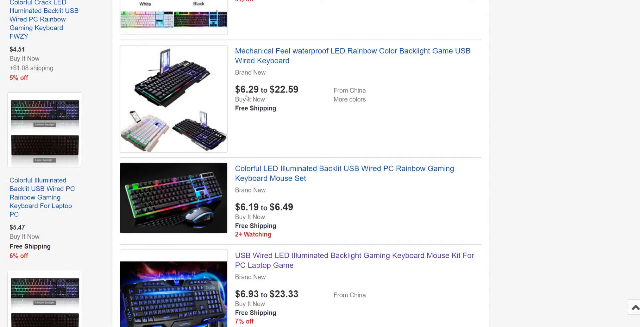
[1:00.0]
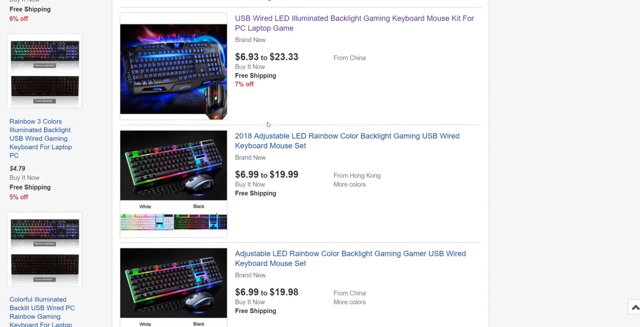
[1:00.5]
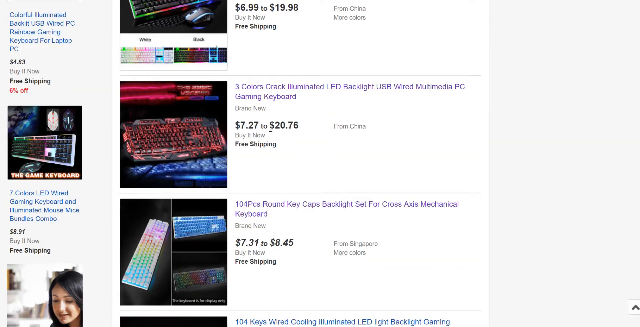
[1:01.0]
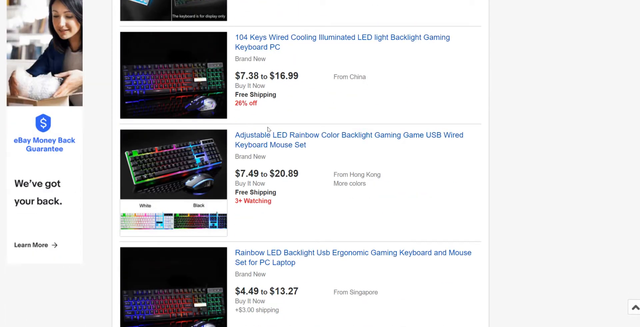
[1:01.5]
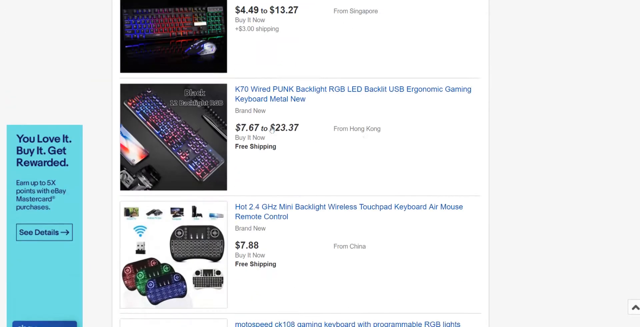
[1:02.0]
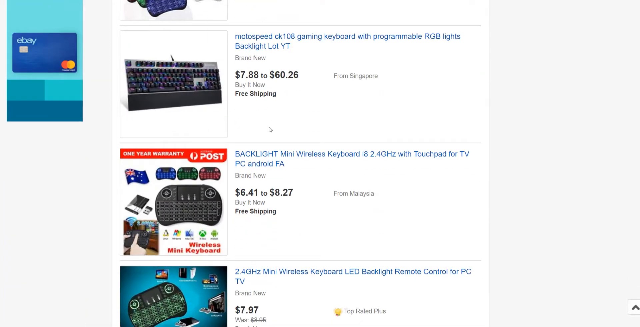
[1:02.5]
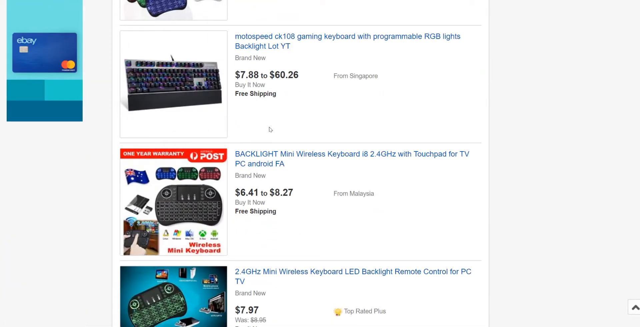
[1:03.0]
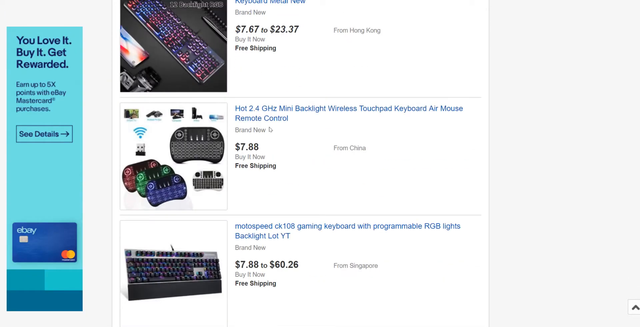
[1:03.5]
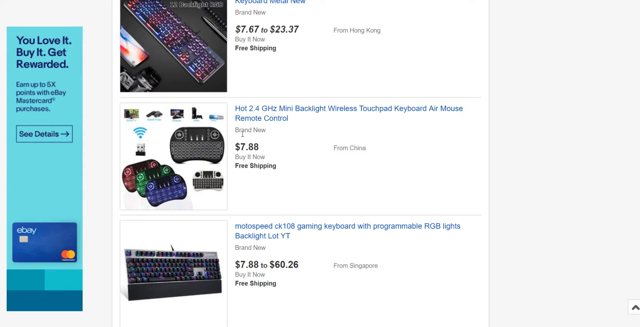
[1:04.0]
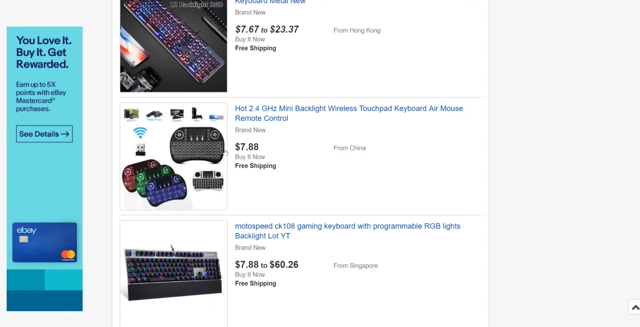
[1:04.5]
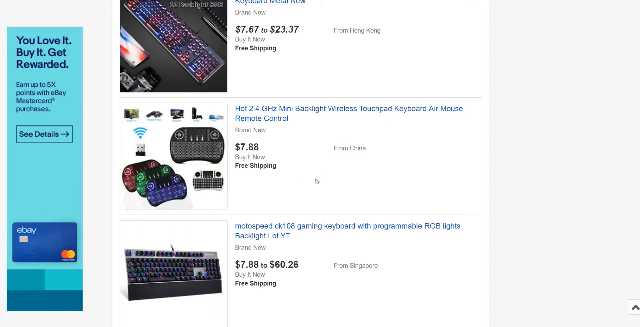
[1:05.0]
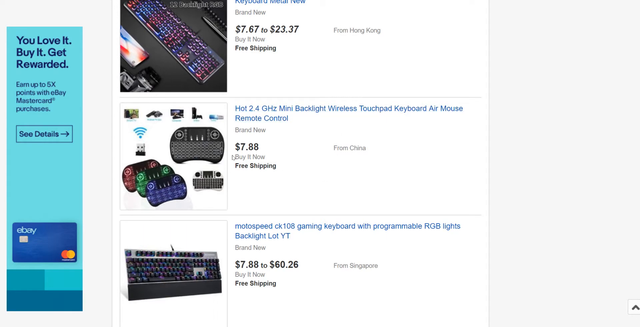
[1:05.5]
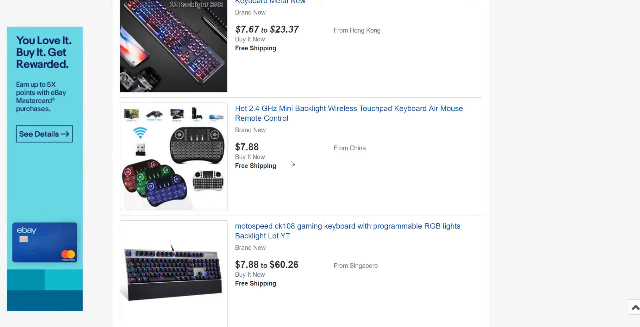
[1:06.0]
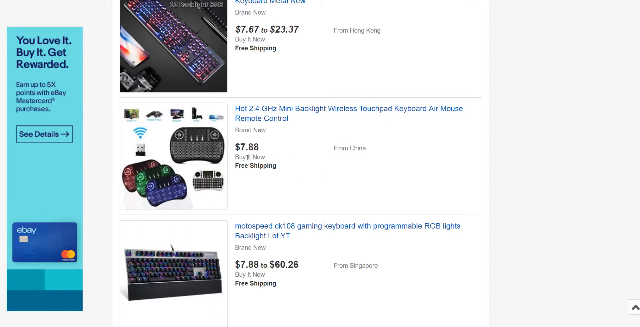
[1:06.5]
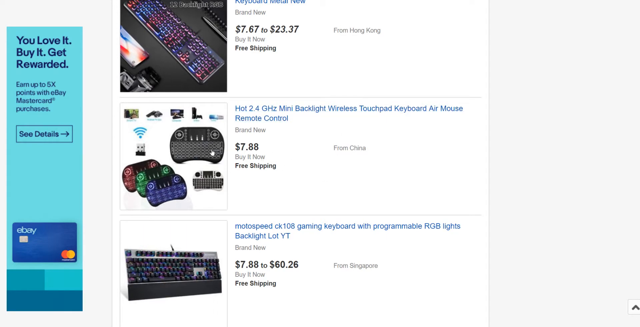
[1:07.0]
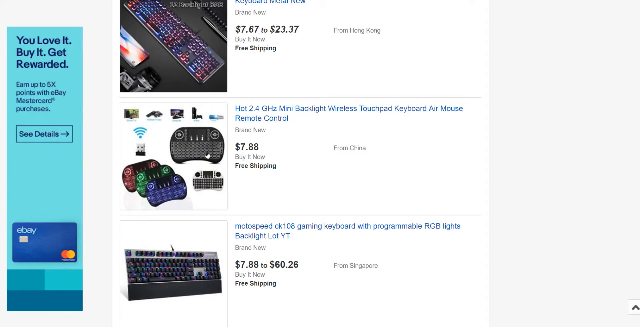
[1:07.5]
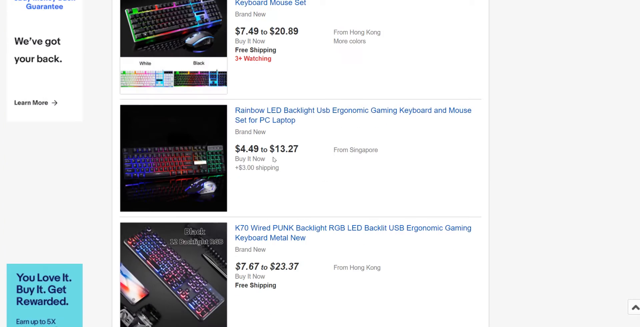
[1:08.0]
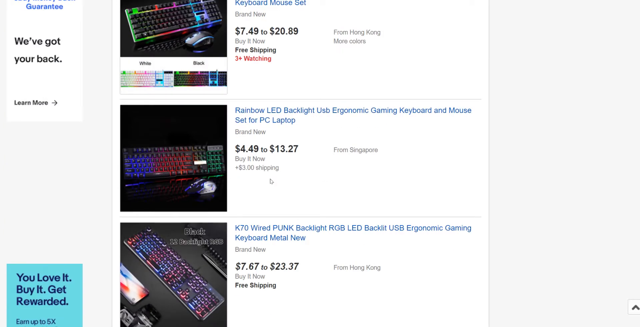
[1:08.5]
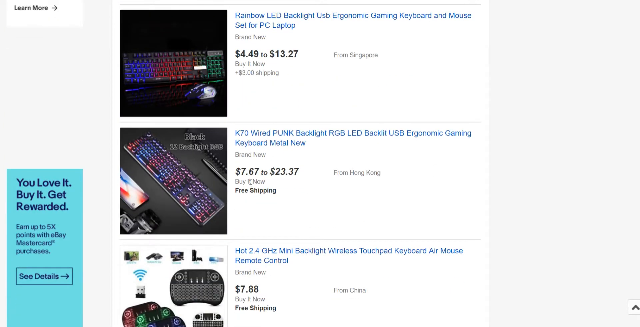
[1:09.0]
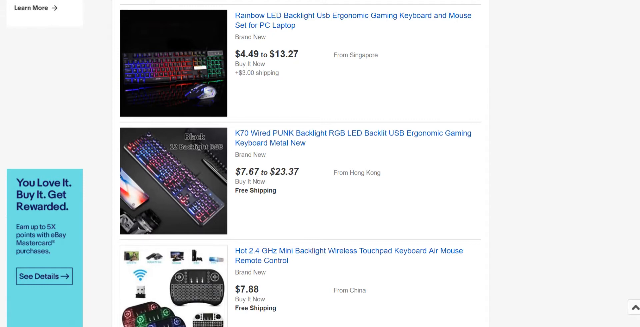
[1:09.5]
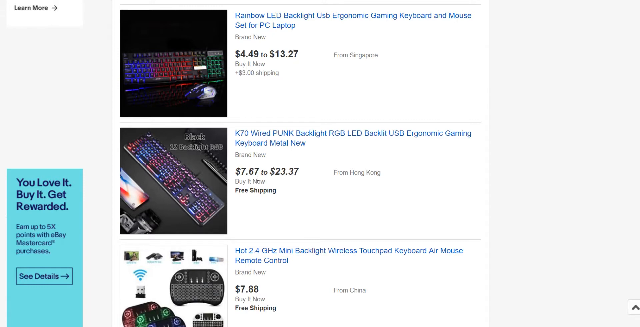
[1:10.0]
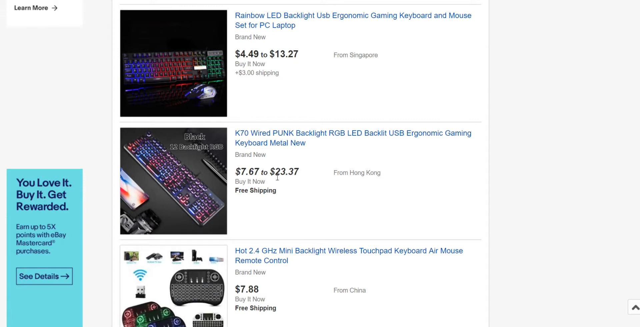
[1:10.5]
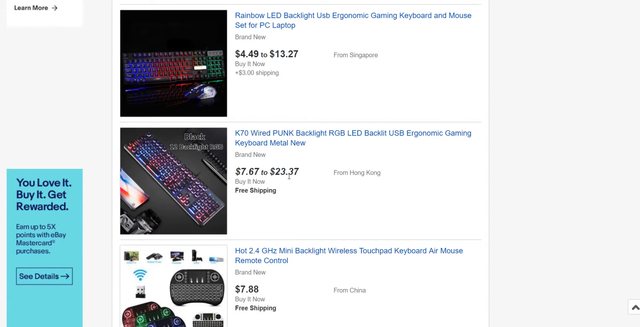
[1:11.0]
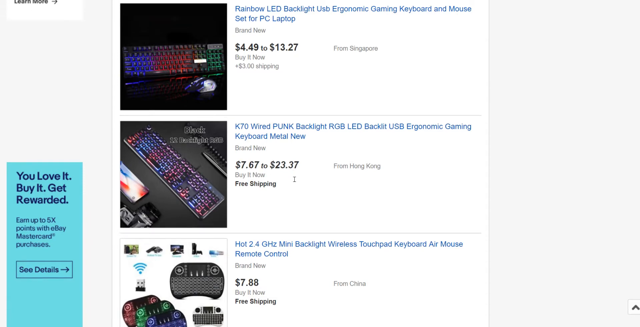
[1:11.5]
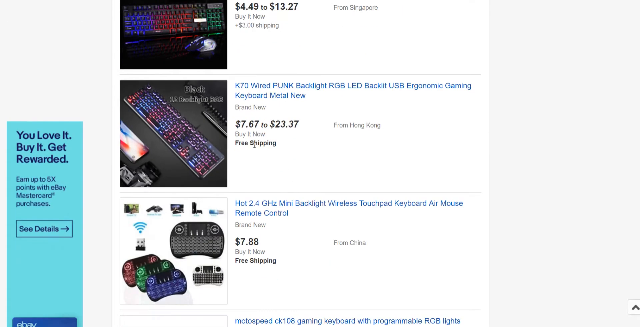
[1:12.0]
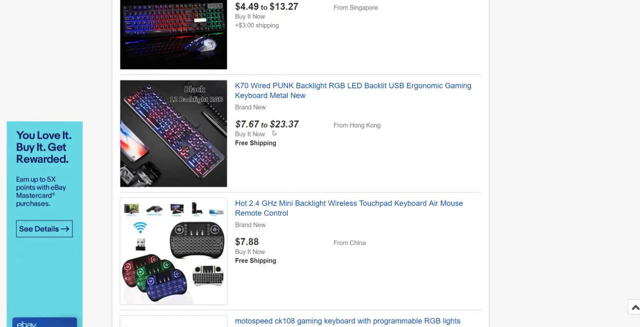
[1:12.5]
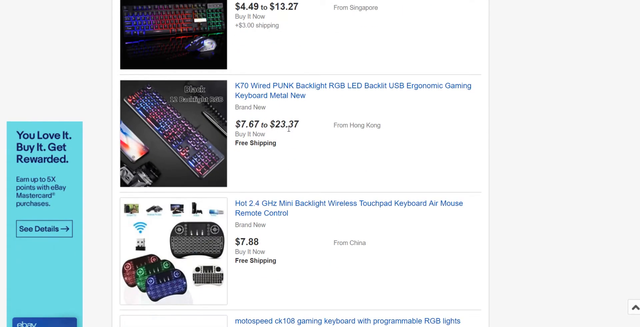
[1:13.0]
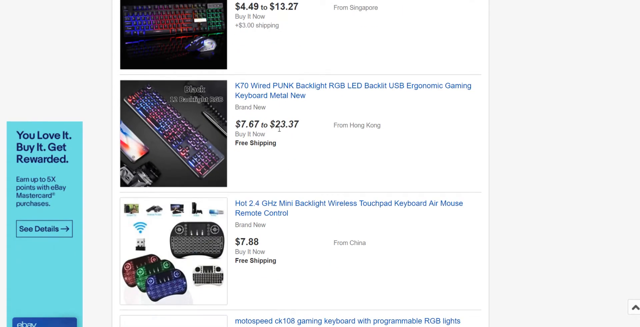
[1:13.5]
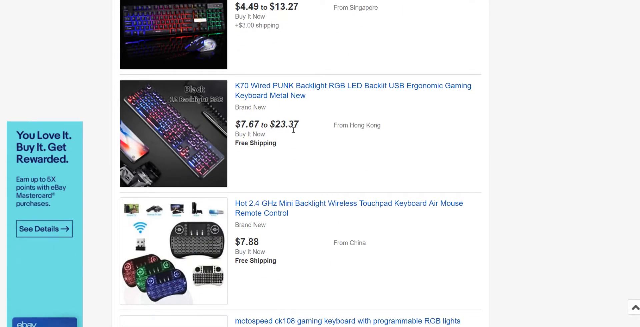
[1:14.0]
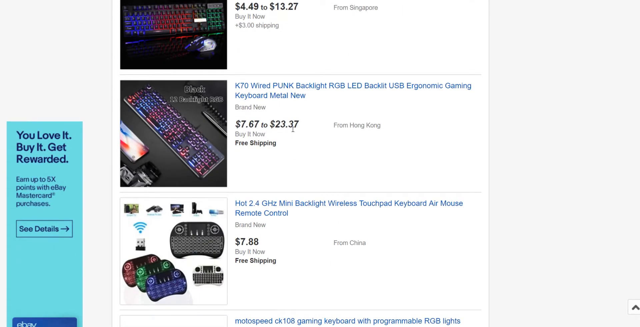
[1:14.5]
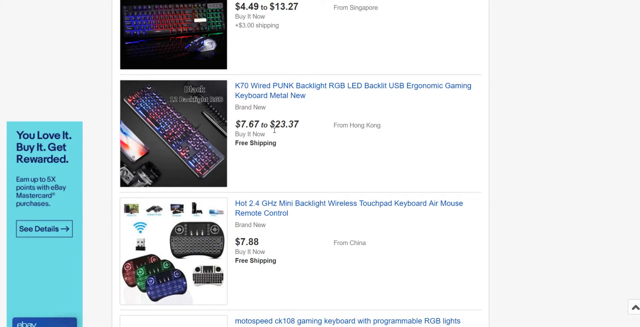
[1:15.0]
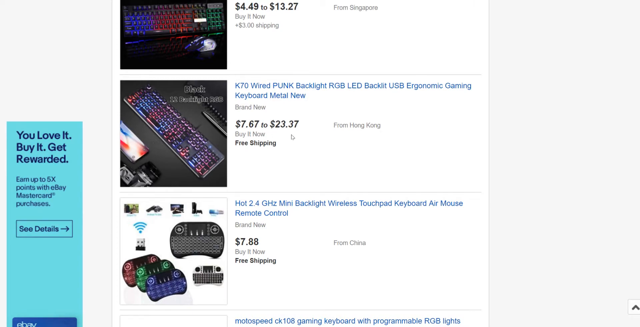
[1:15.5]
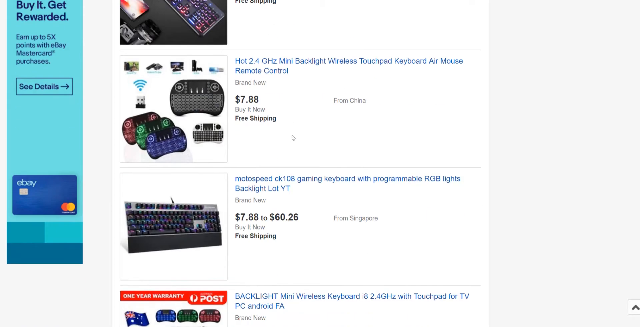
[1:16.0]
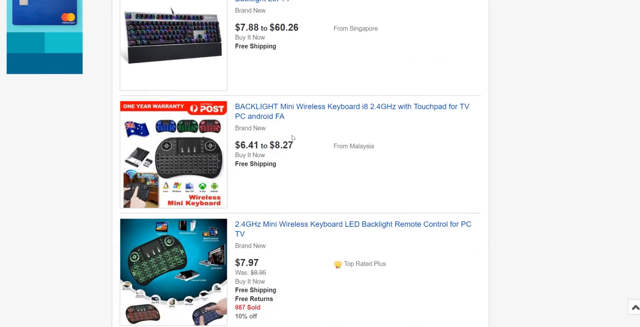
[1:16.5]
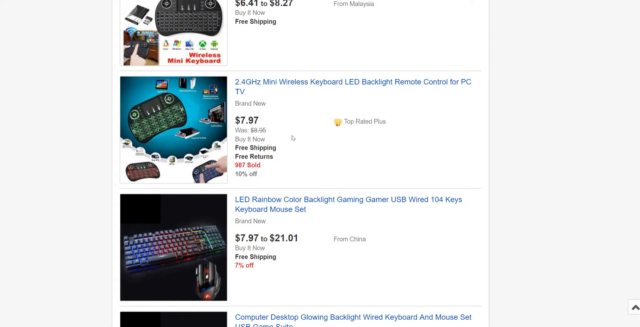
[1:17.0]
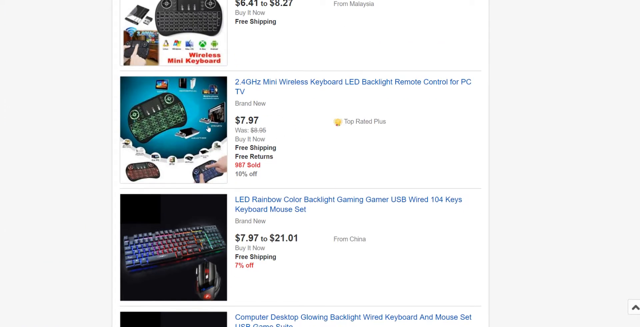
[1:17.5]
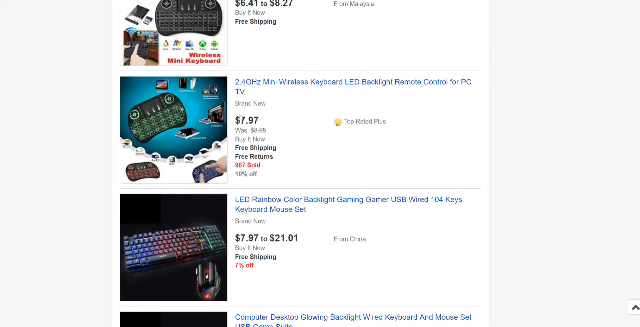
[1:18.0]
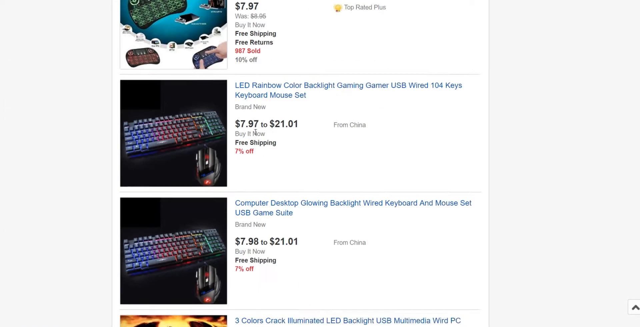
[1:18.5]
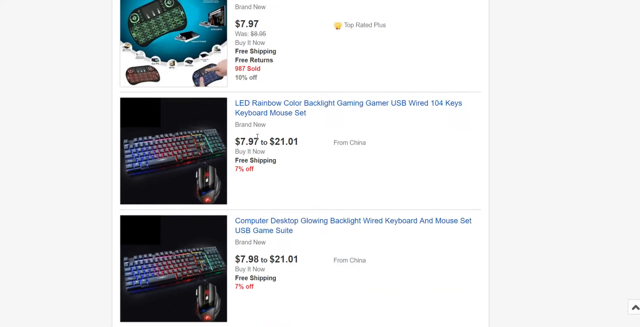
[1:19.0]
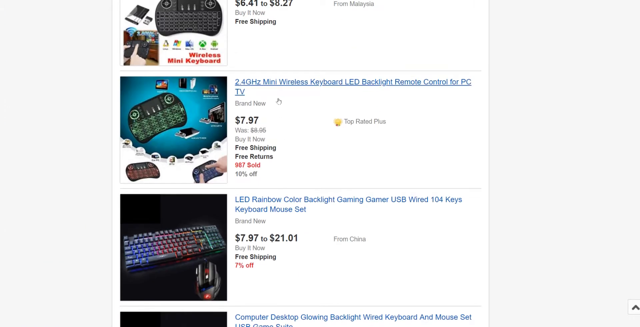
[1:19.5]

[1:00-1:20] Much farther down the page is a listing that says "hot 2.4 gigahertz mini backlight wireless touchpad keyboard air mouse remote control." This keyboard is quite different from the standard ones, shaped a little more like a video game controller, and they all seem to have different colors. The person circles the mouse over the listing and its price, $70.88, with free shipping, from China. They move to the listing above it, a "K70 wired punk backlight RGB LED backlit USB ergonomic gaming keyboard metal new," priced $7.67 to $23.37, from Hong Kong, again running the cursor back and forth to highlight the price. They do the same with another listing a little below the first one shown, a similar keyboard that looks more like a game controller than a standard keyboard; it appears to have only a green backlight option rather than the different colors of the previous listing.